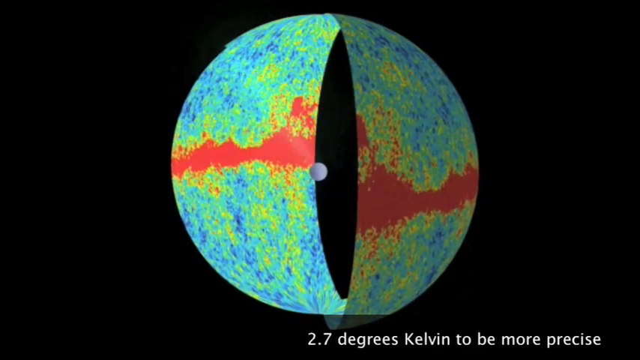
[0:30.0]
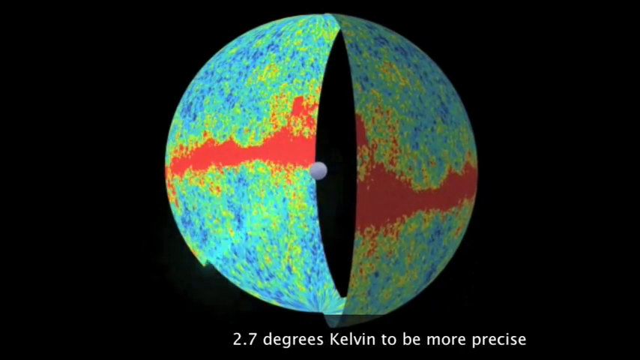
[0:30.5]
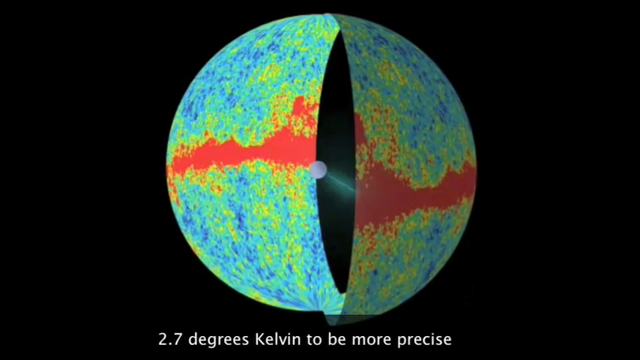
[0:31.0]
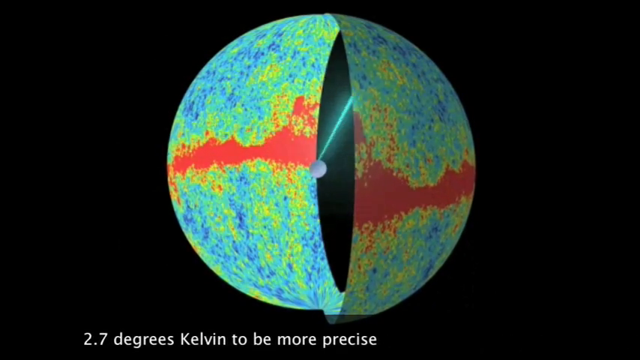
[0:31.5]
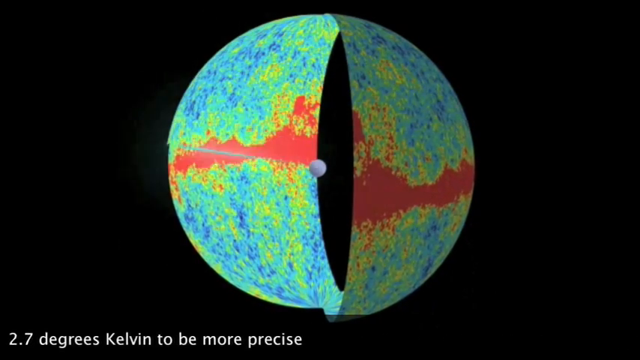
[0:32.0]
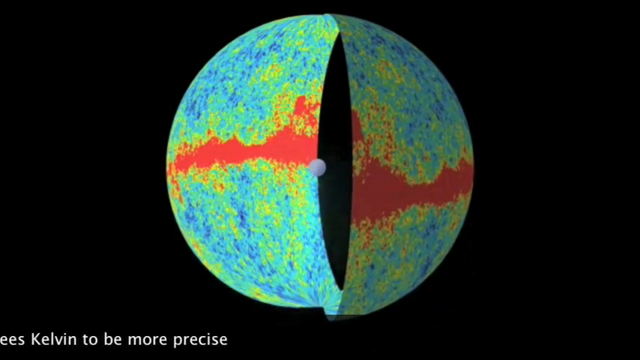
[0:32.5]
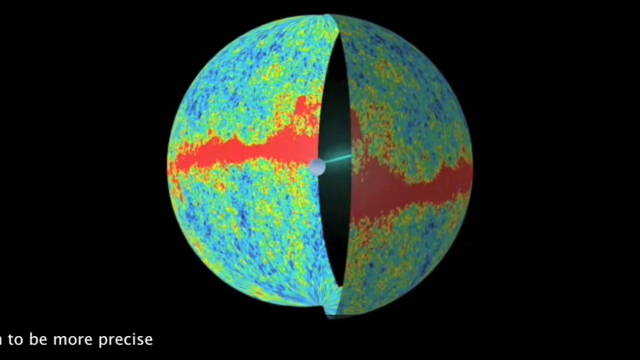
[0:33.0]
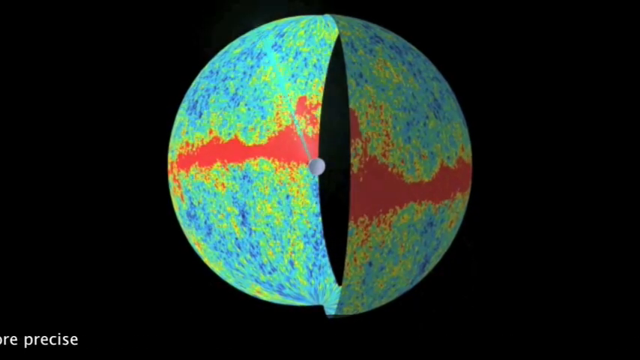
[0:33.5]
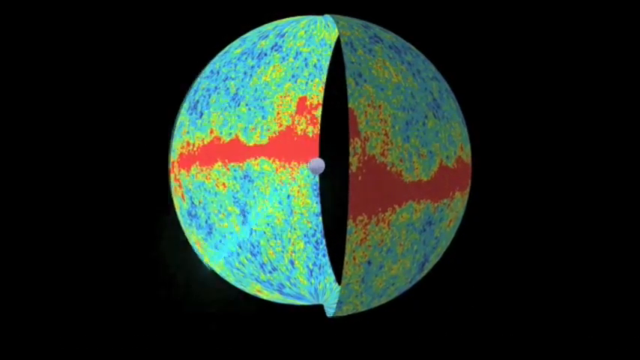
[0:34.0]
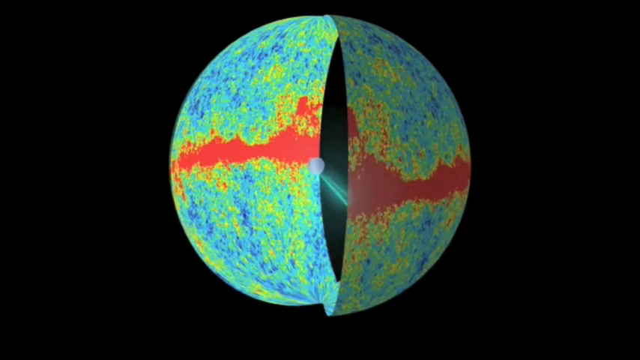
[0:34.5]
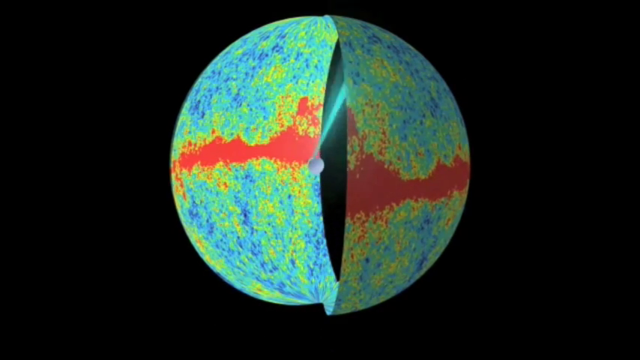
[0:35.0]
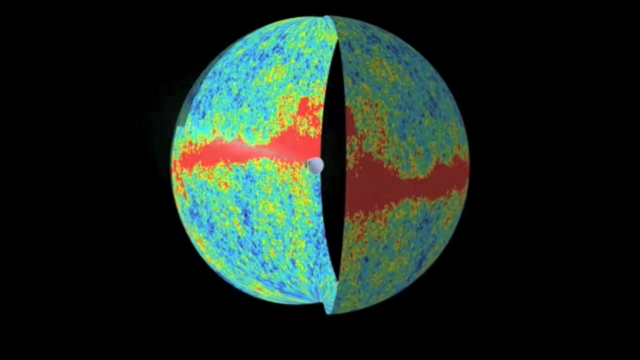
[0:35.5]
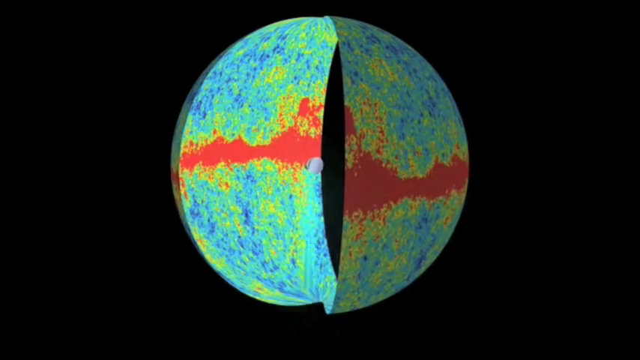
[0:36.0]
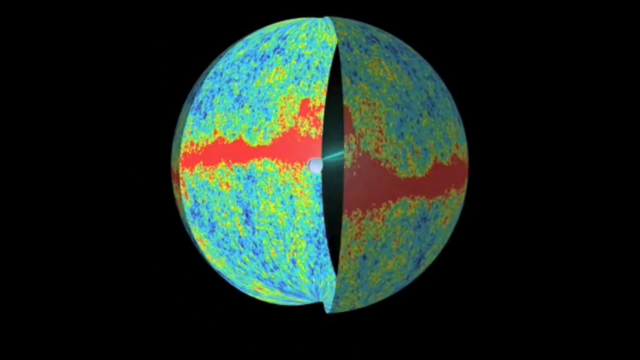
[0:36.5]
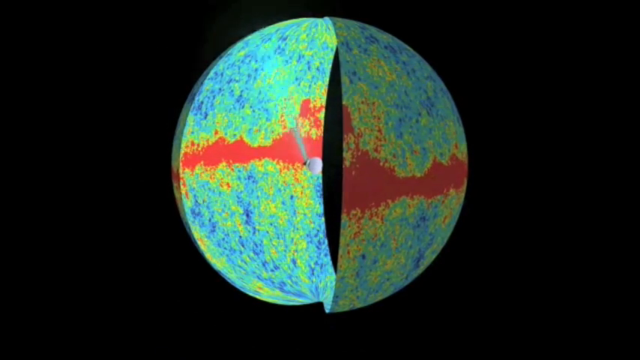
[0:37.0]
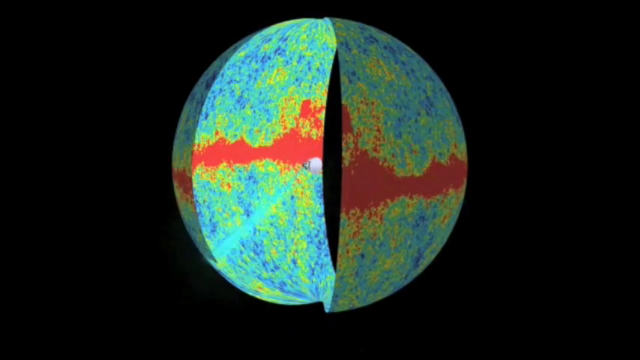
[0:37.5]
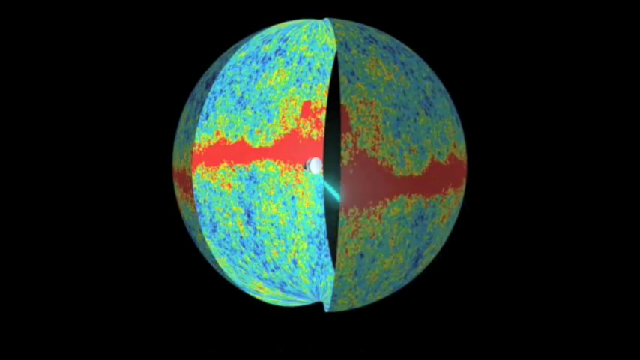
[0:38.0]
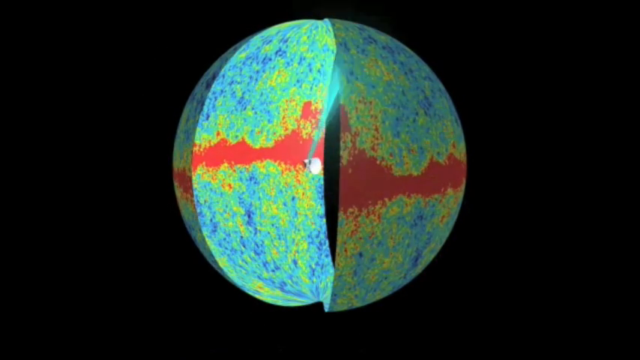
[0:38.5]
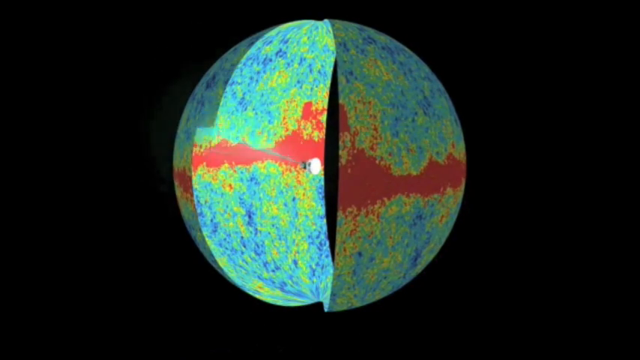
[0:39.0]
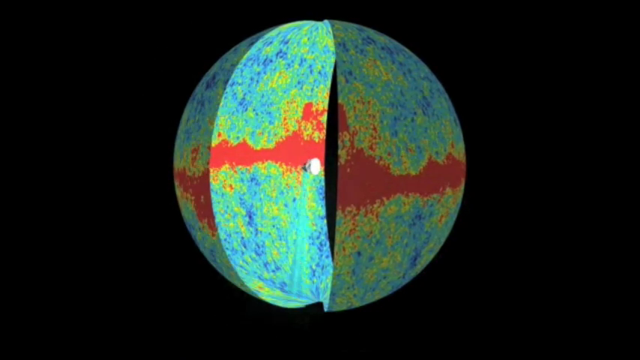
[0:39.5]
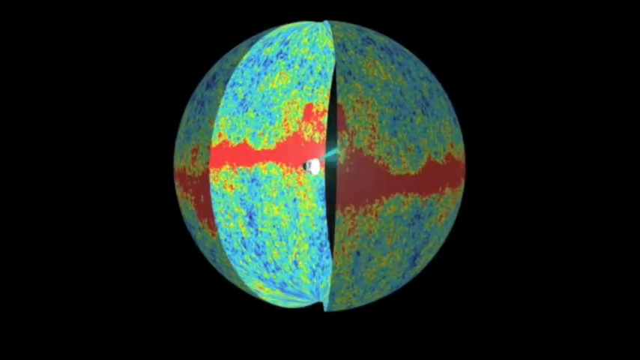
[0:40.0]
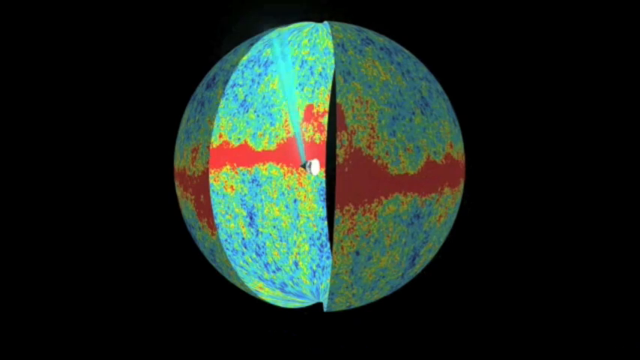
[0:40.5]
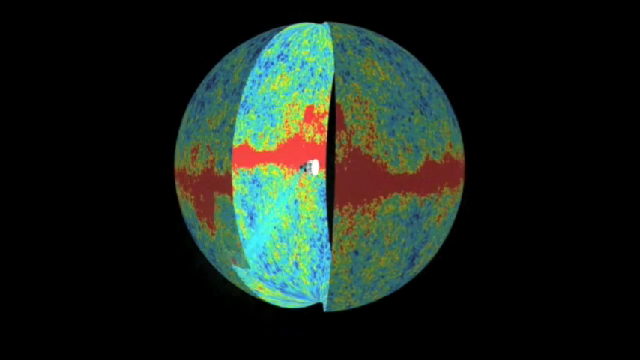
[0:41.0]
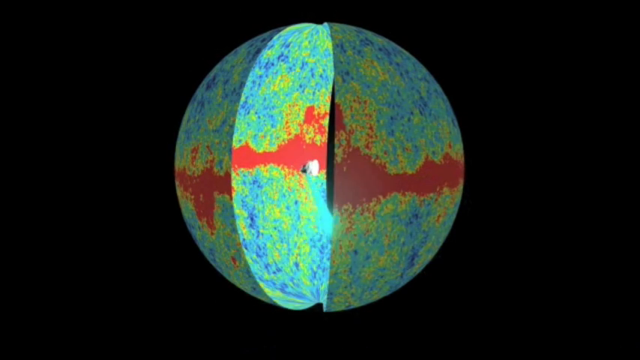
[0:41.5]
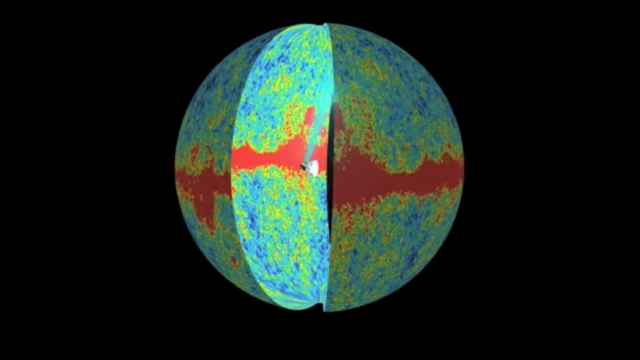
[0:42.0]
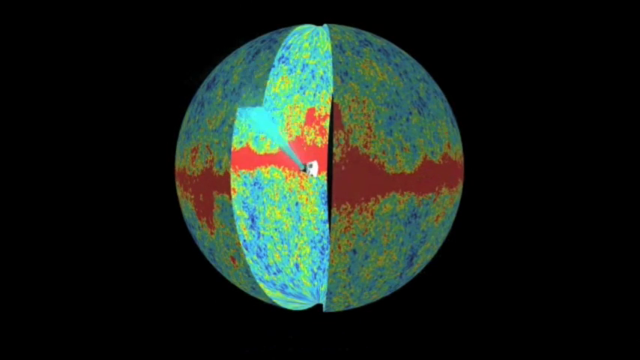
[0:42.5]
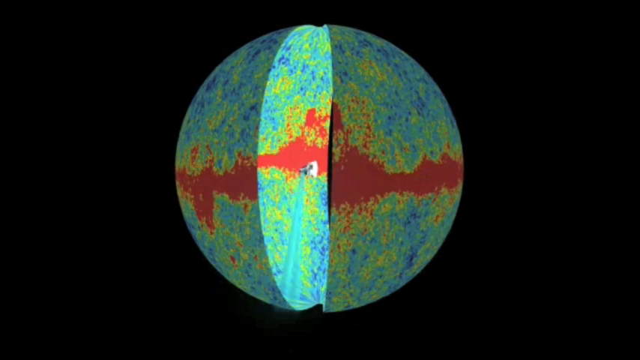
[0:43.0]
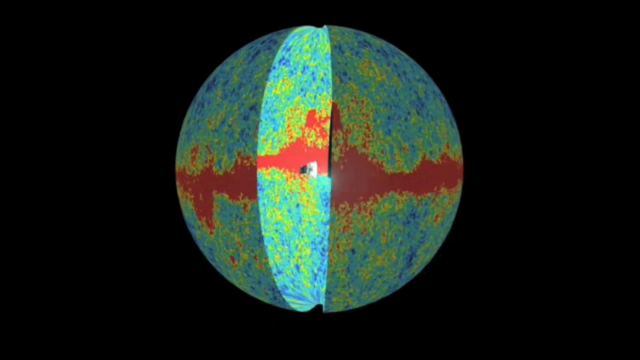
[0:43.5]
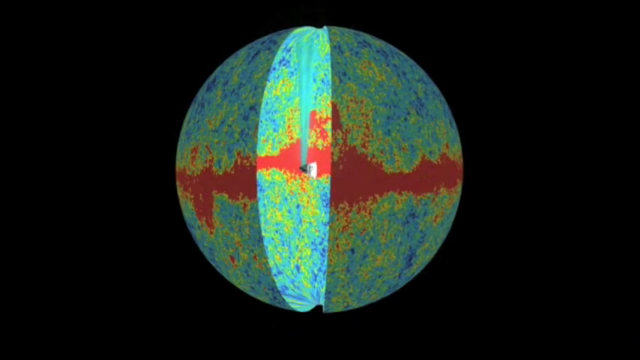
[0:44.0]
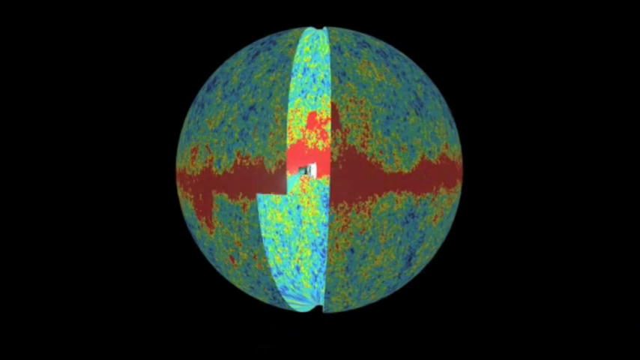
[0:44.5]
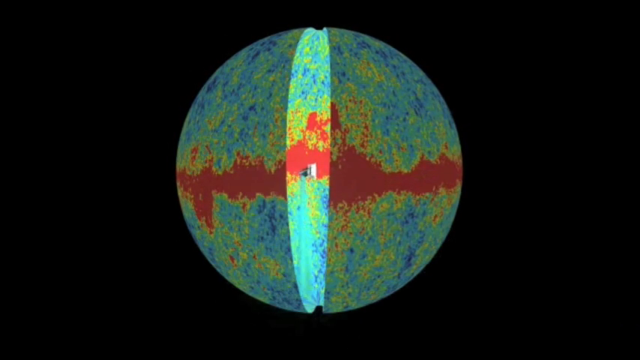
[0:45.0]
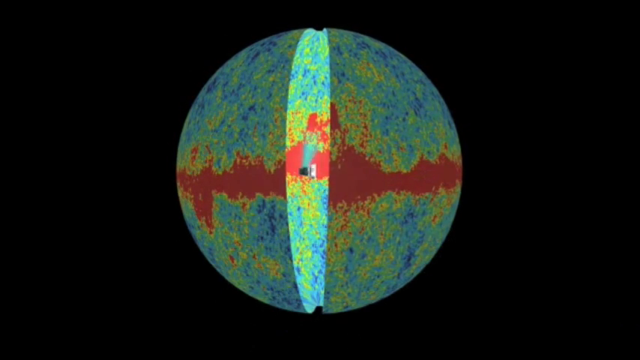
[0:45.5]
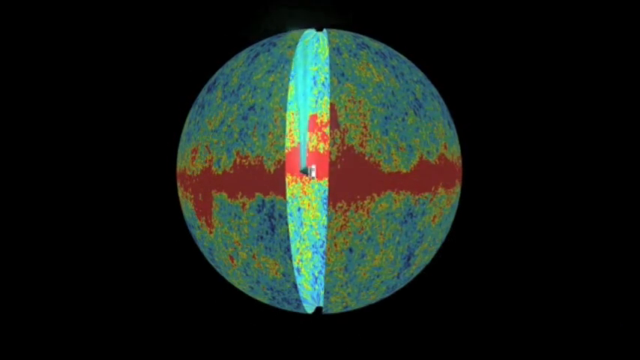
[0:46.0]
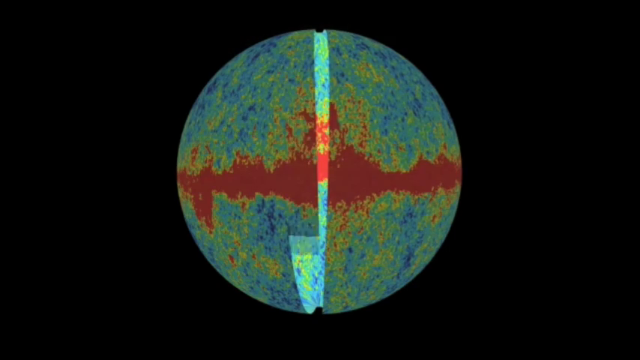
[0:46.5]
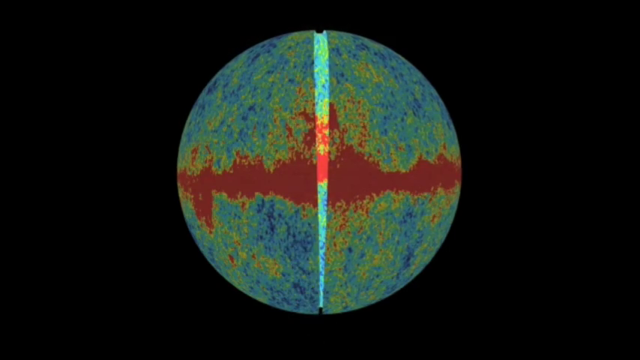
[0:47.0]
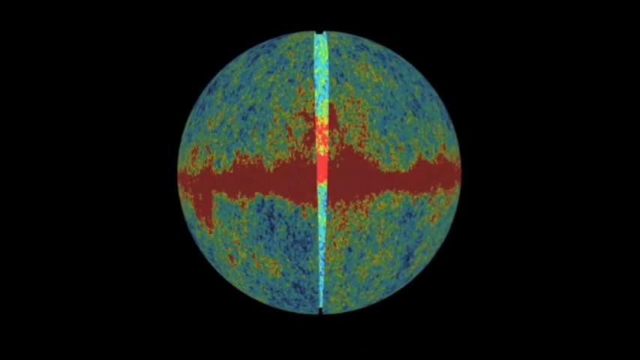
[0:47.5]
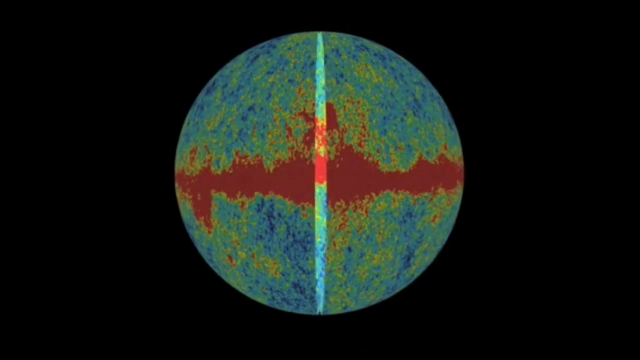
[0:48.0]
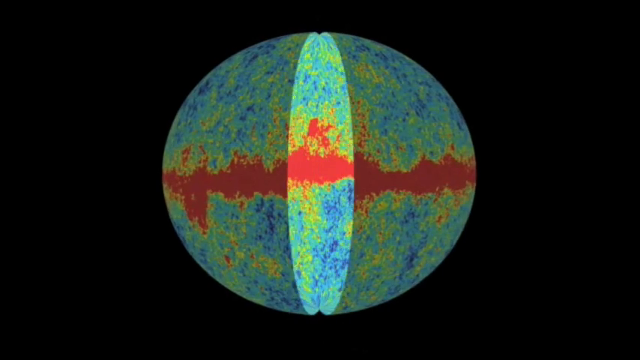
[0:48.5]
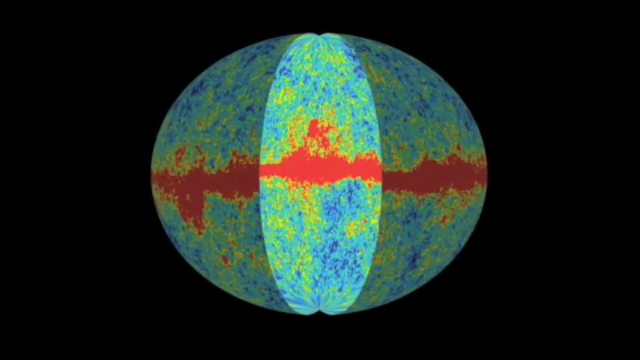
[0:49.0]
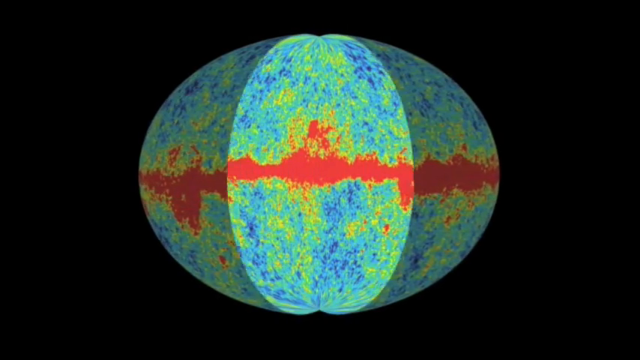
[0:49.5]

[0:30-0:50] The computer graphic continues with the device spinning in a circle and kind of emitting a beam of light that forms a structure, which at first seems kind of hollow and ring-shaped. As the device completes its rotations, it seems to seal the structure off, so the structure, kind of speckled with red, green, yellow and blue, now kind of forms a closed ball of sorts. The structure is hollow on the inside, and the device disappears as it completes. The structure is then shown from a different angle where it kind of flattens out, though it is apparently still meant to be a ball-type structure, possibly shown this way so its completed appearance is more apparent.